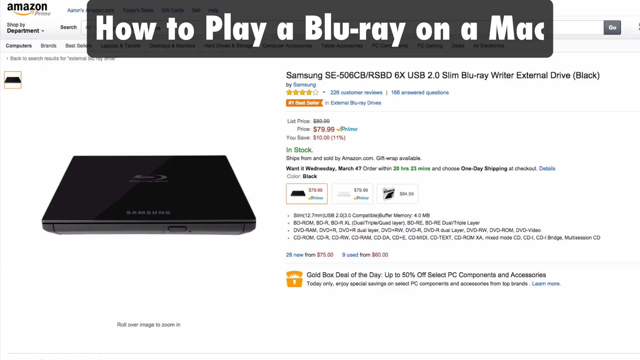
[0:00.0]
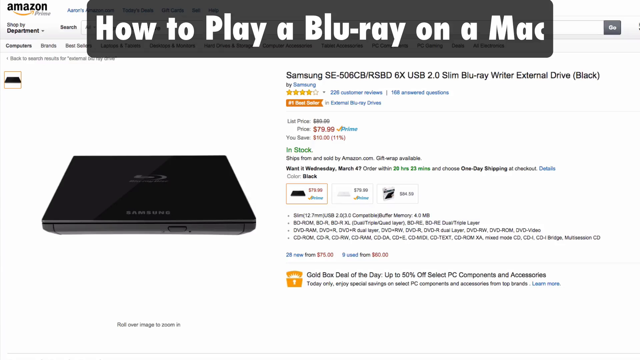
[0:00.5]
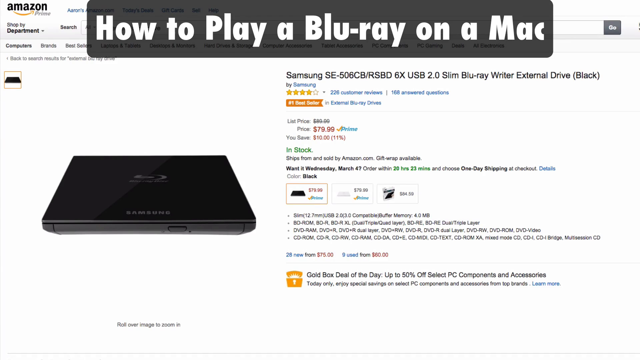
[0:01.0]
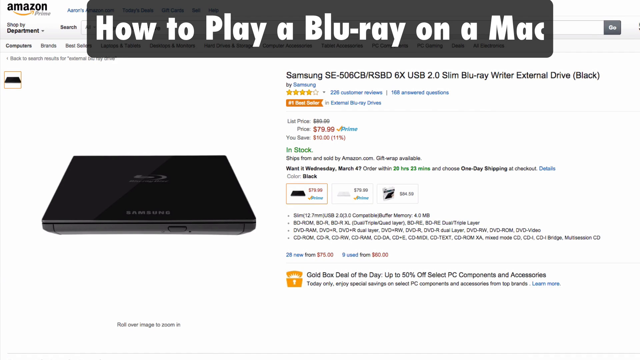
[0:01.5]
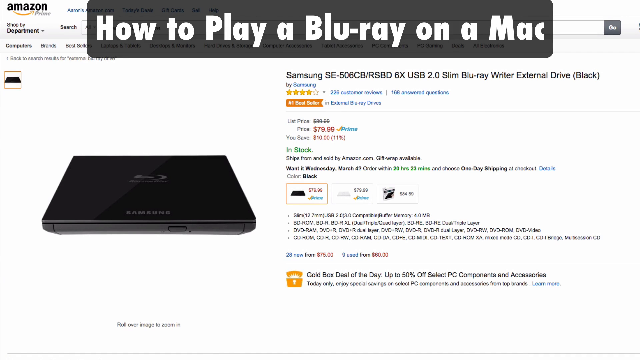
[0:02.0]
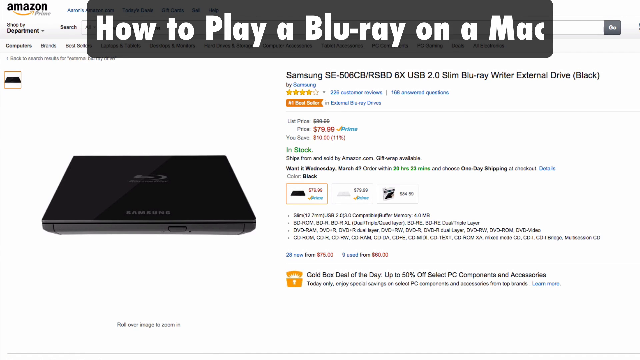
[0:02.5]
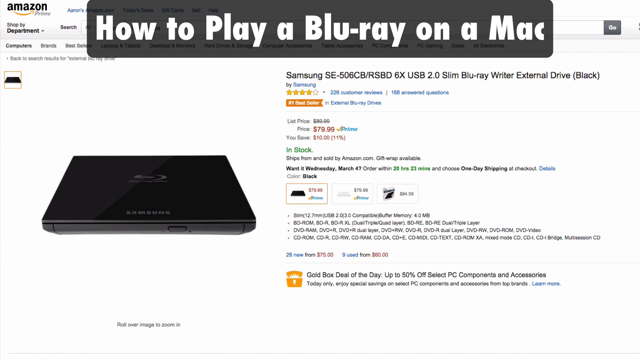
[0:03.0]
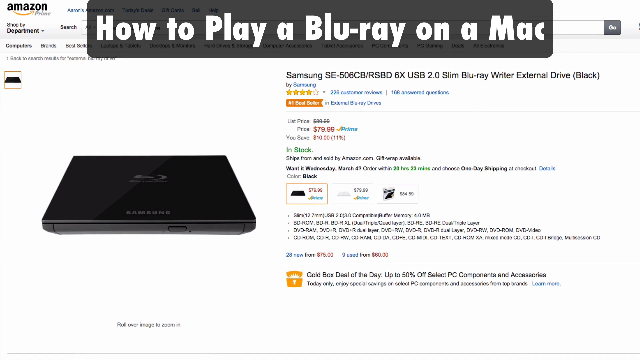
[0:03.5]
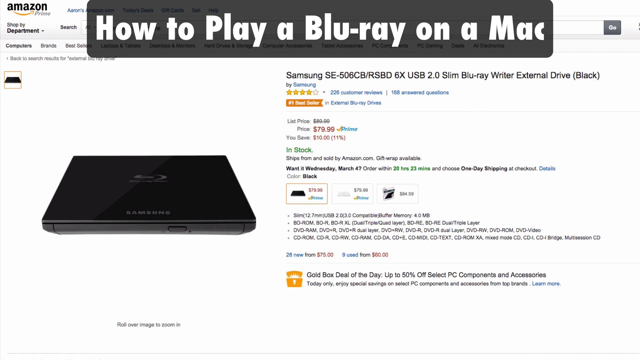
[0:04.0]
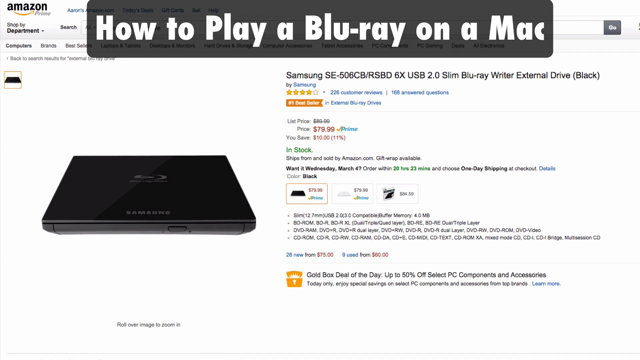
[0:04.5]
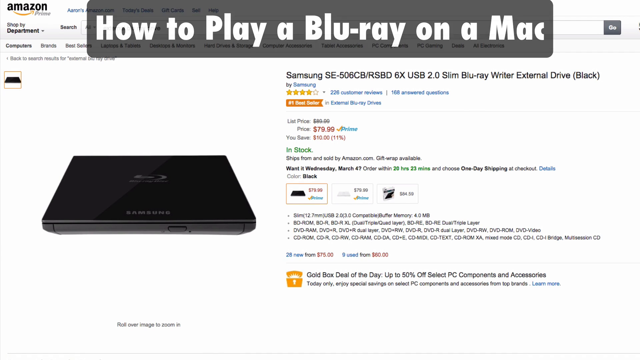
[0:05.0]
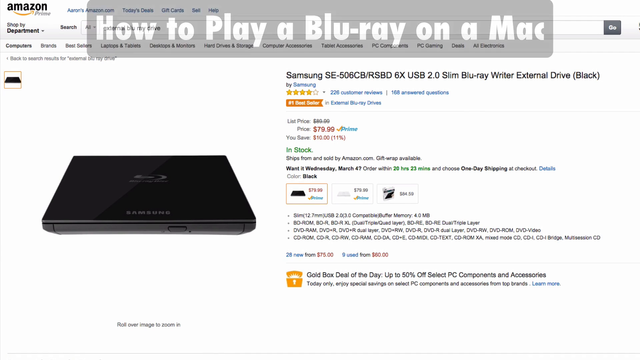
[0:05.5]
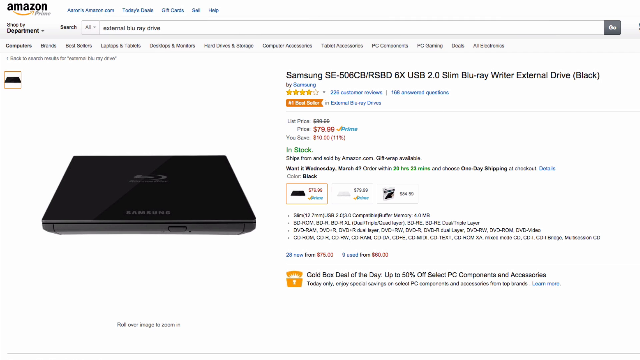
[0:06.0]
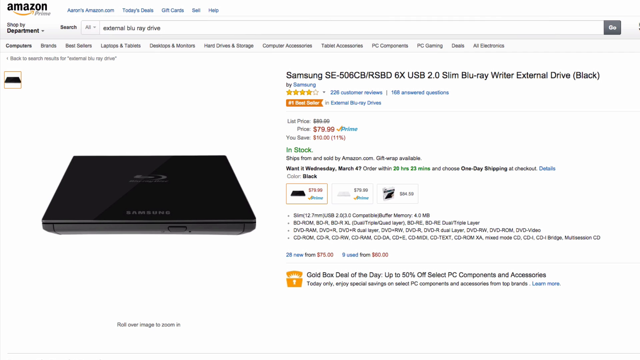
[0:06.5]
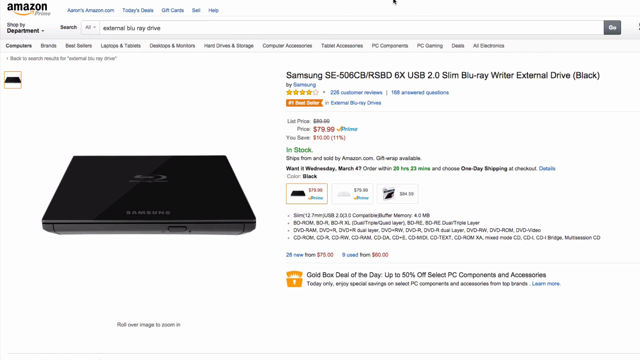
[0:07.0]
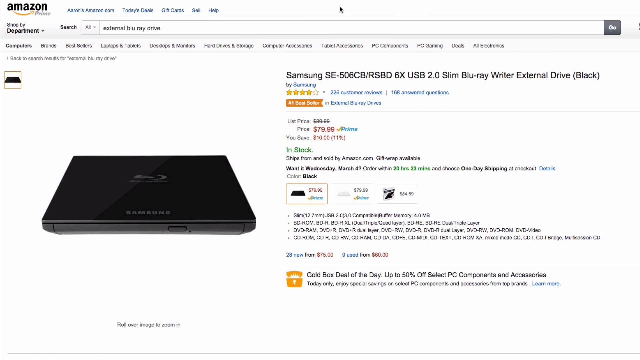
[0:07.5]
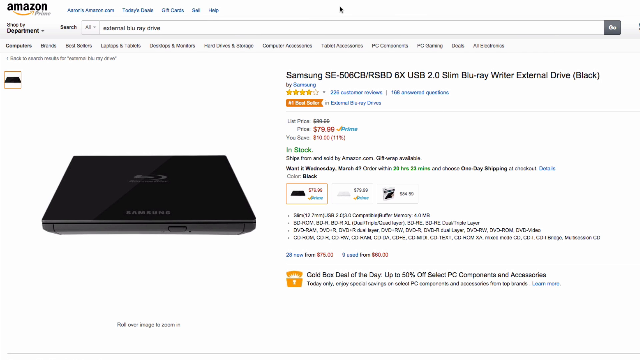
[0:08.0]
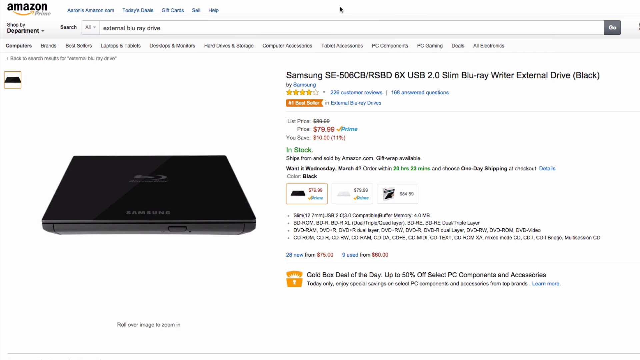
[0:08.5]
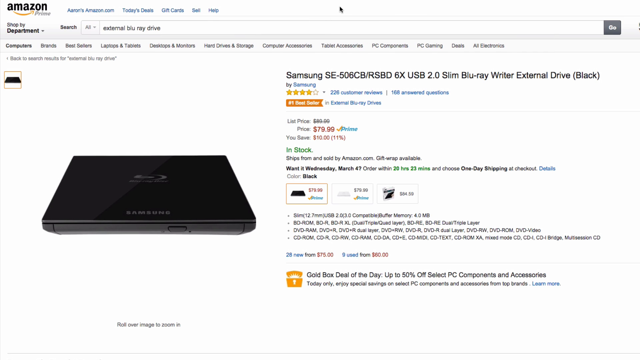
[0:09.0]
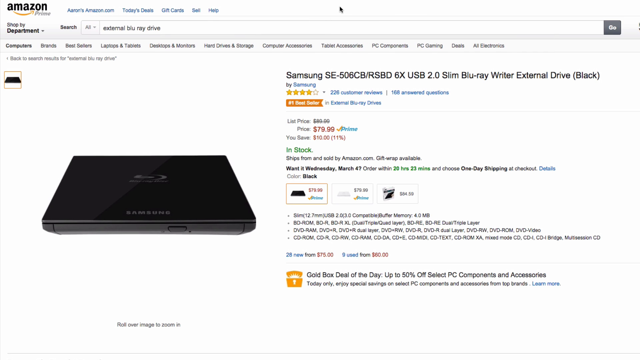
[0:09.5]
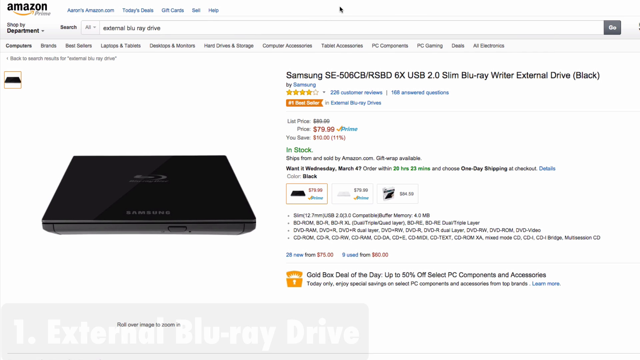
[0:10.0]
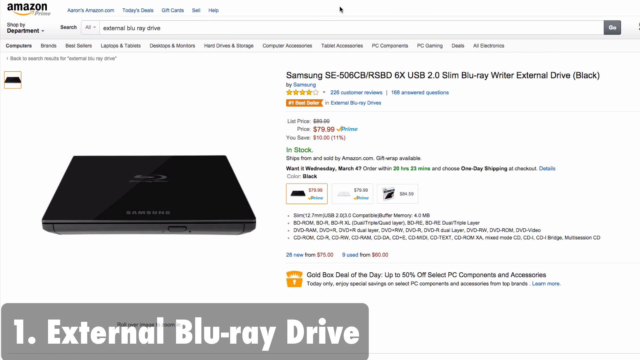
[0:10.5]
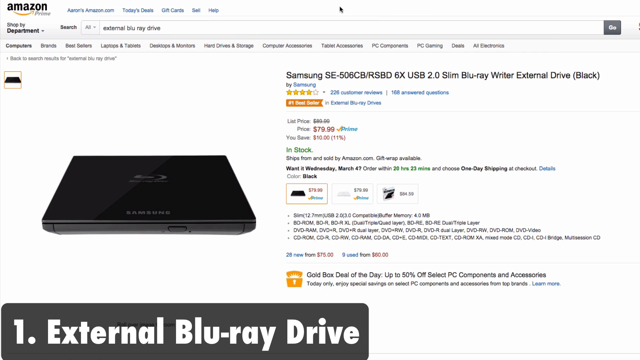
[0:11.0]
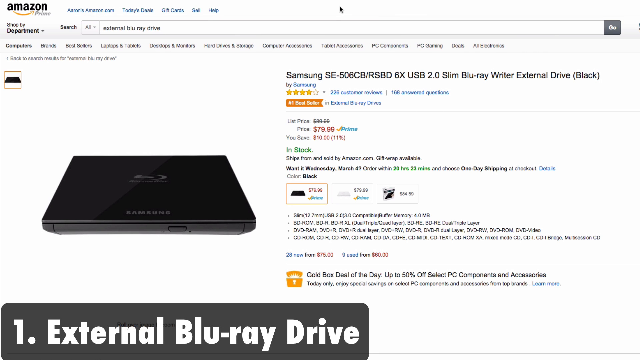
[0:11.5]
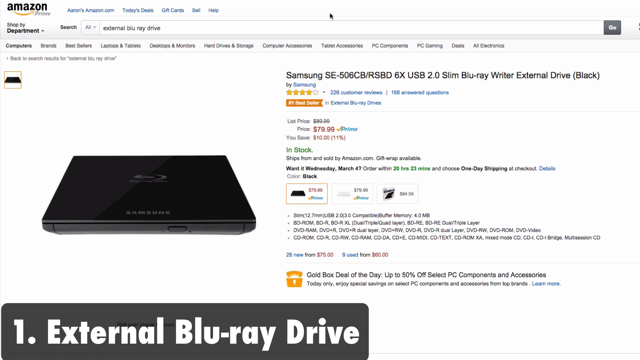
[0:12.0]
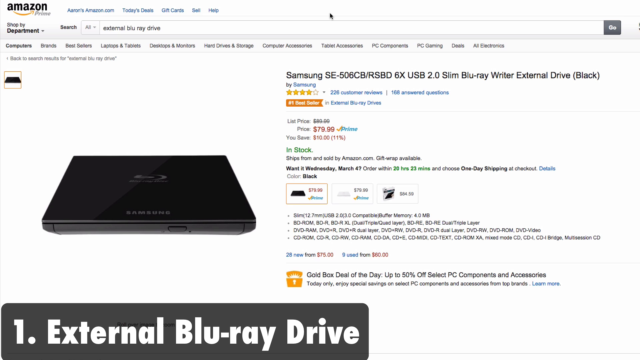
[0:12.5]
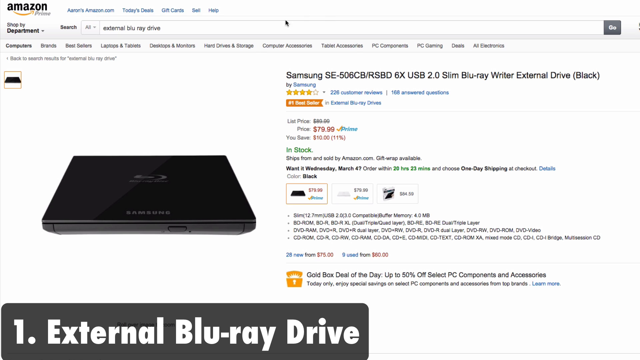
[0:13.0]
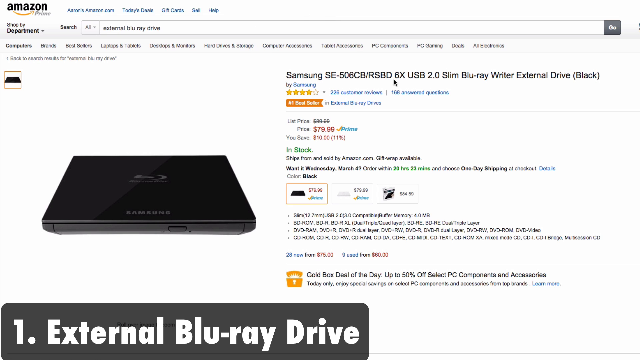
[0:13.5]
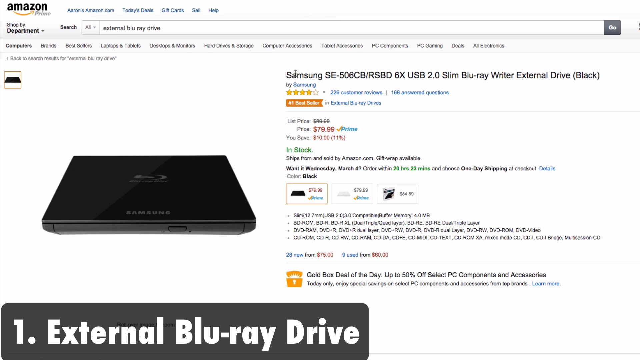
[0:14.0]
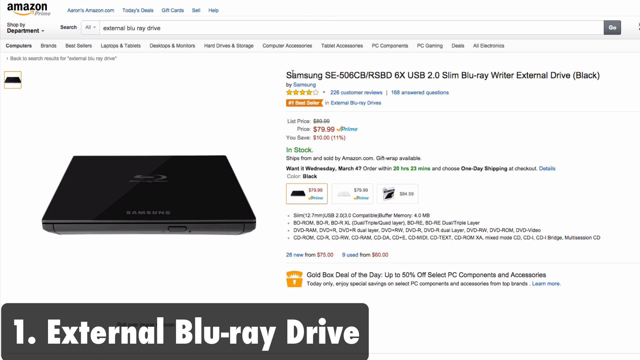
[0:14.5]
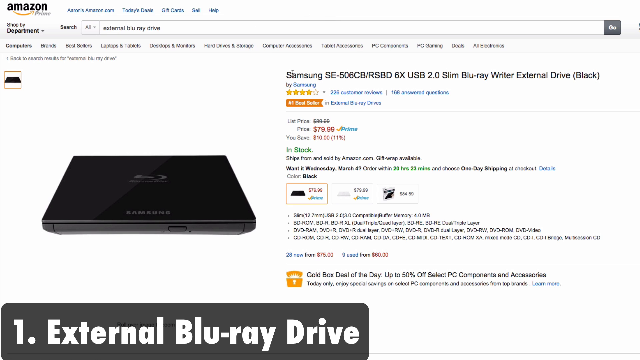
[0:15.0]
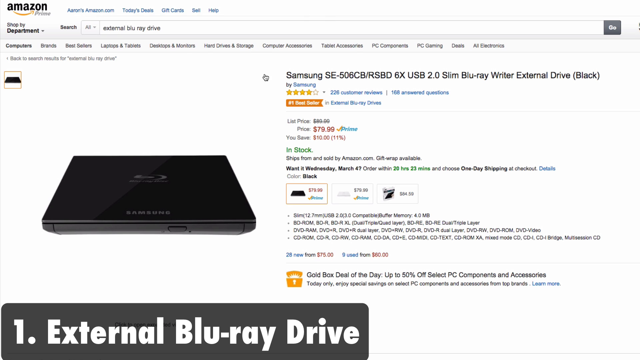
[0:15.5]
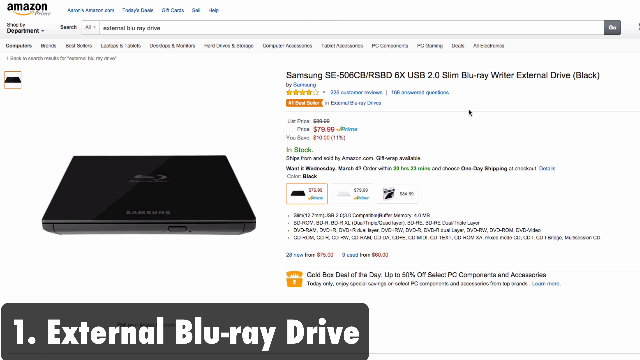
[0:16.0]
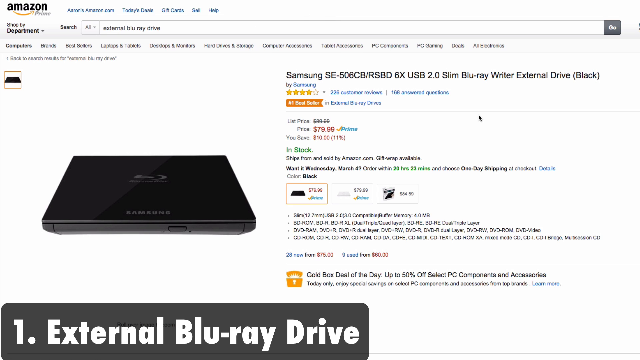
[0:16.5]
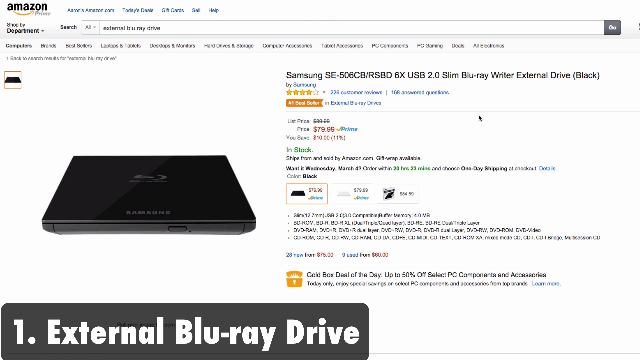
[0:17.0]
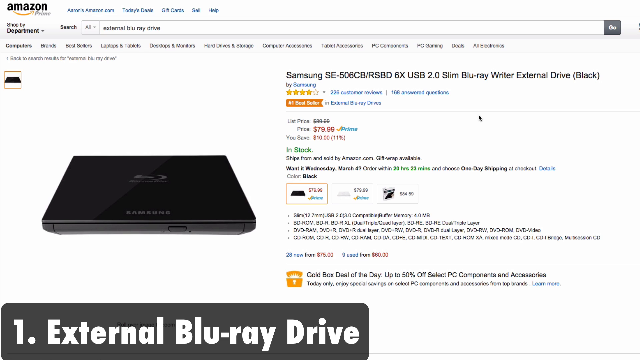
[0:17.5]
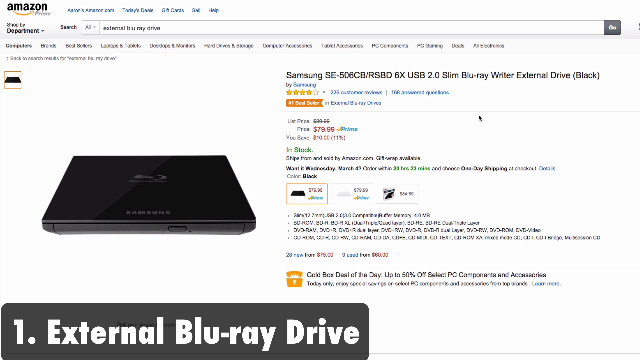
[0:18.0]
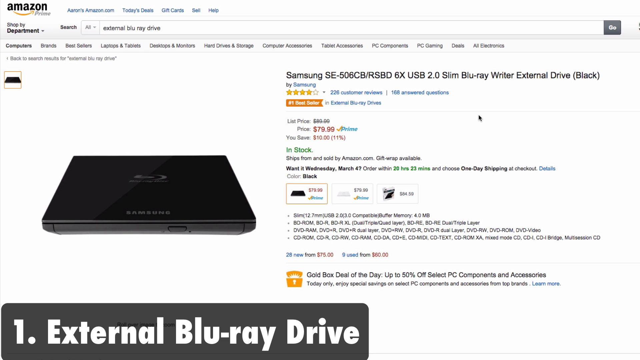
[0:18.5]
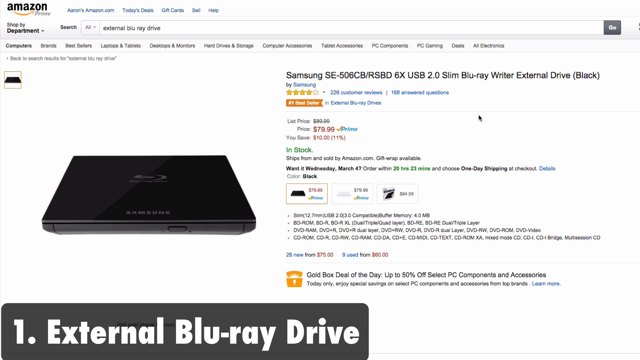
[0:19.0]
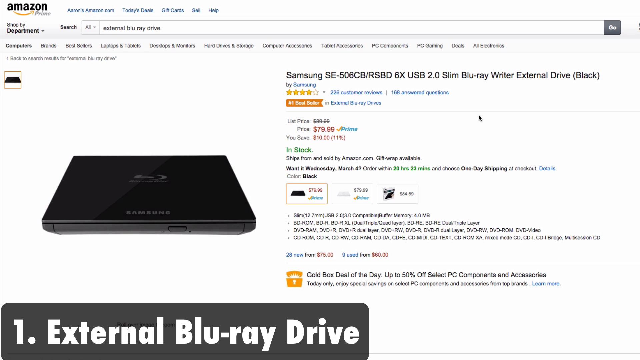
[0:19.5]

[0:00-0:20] A screen showing an Amazon website appears, probably someone recording their screen. A black text box reads "How to play a Blu-ray on a Mac." The product on the Amazon page is a Samson SC followed by many letters and numbers that are a little blurry and hard to read; the listing looks like it includes "USB 2.0", "Blu-ray" and "External Drive". The price looks like it might be $79.99. The product is an external Blu-ray drive. The screencast is very blurry, and the mouse moves around to different points on the screen.